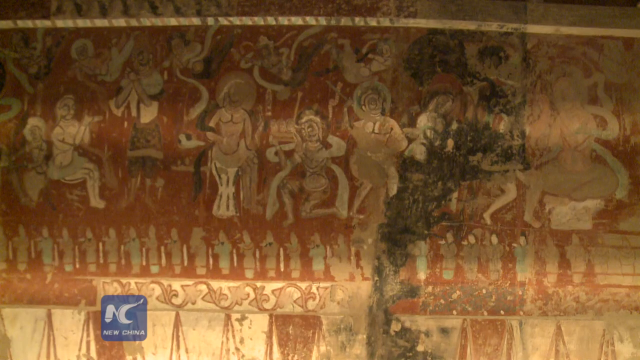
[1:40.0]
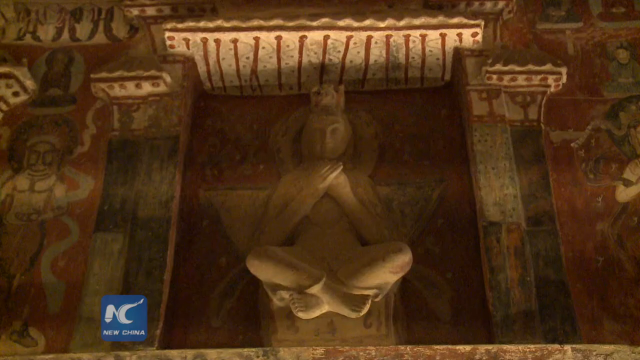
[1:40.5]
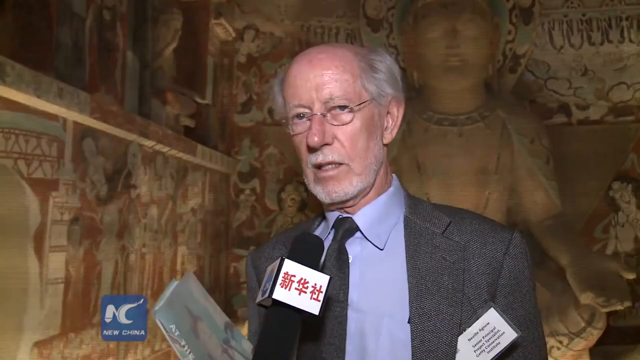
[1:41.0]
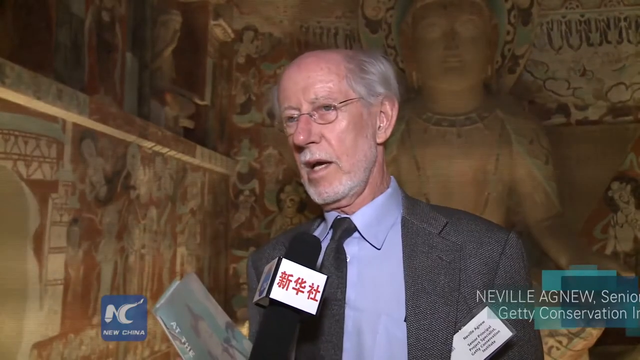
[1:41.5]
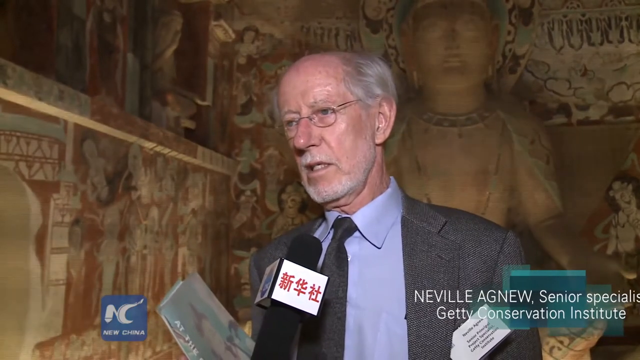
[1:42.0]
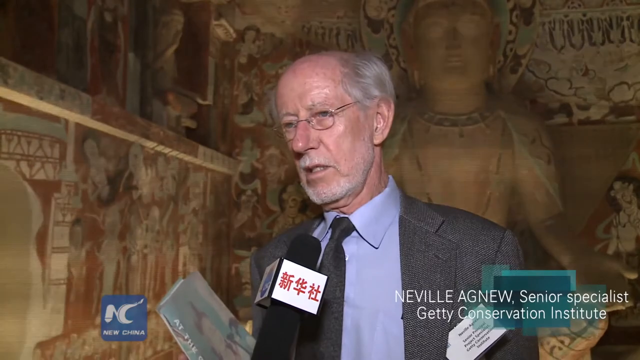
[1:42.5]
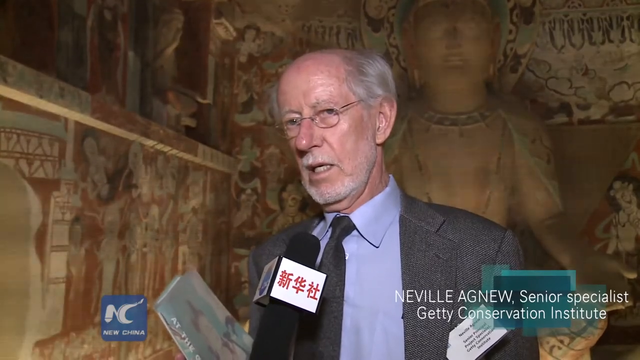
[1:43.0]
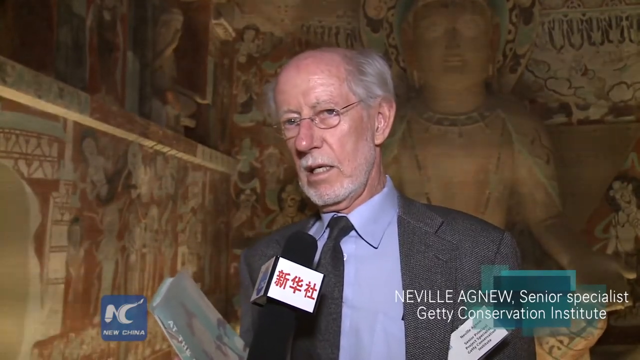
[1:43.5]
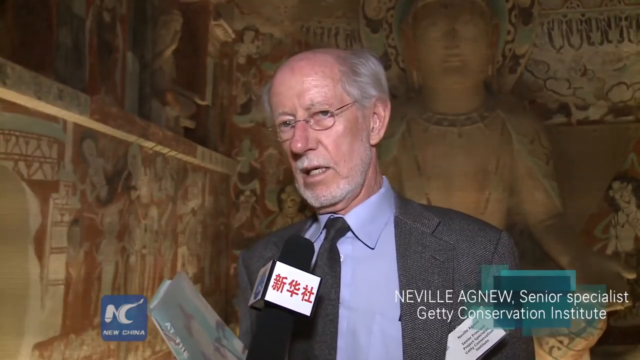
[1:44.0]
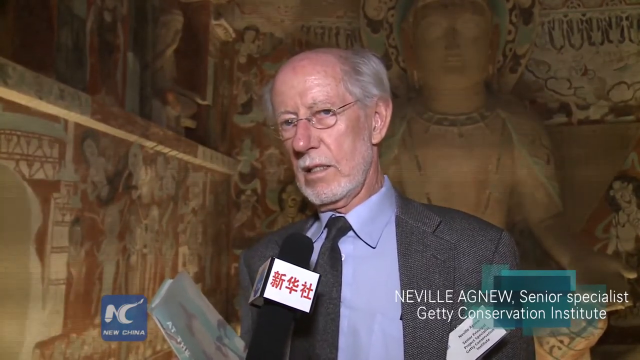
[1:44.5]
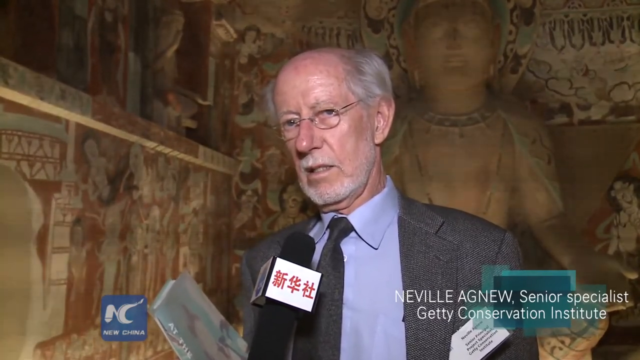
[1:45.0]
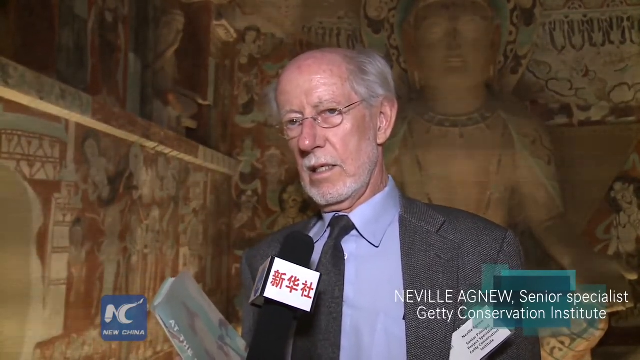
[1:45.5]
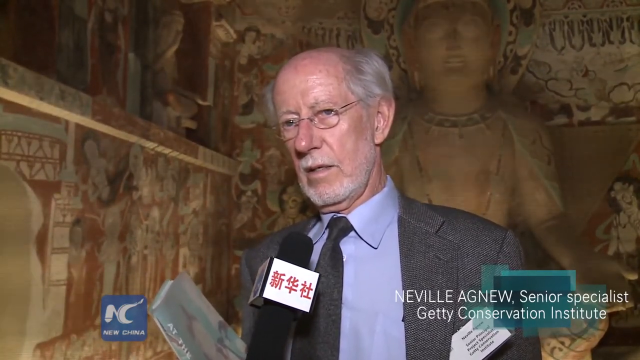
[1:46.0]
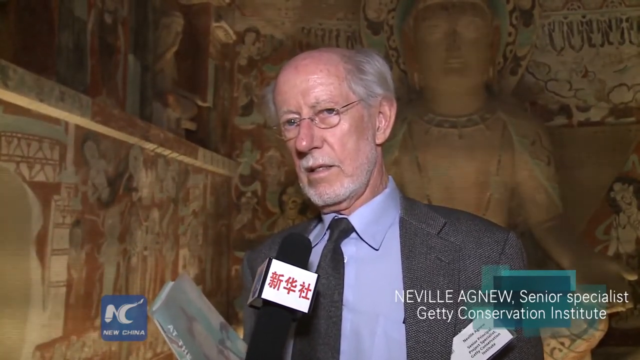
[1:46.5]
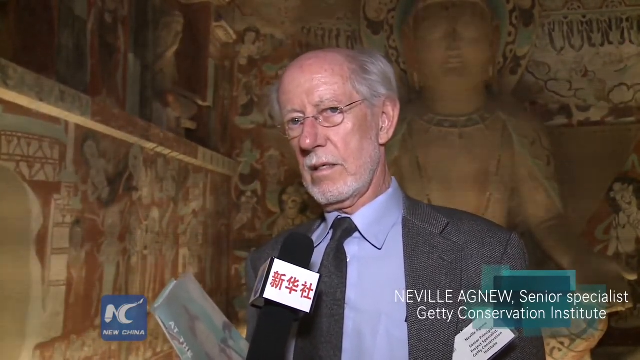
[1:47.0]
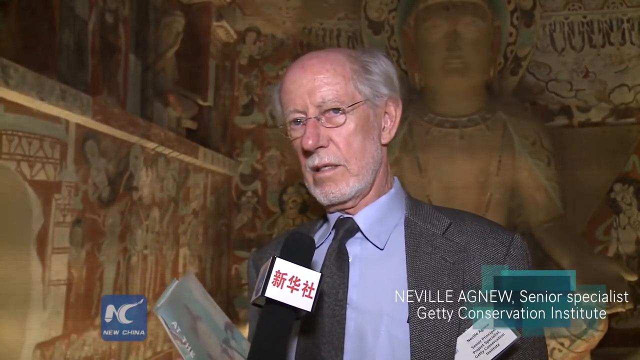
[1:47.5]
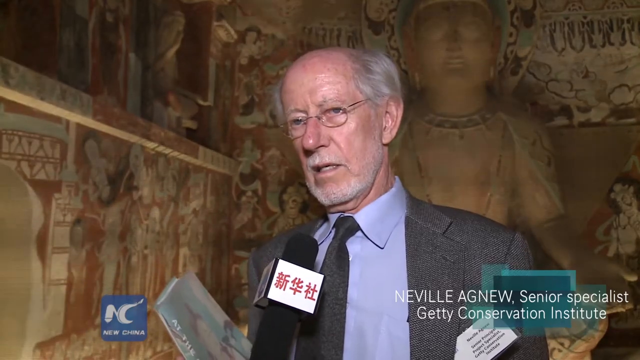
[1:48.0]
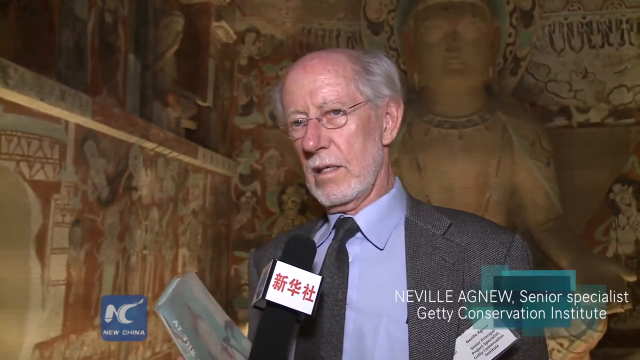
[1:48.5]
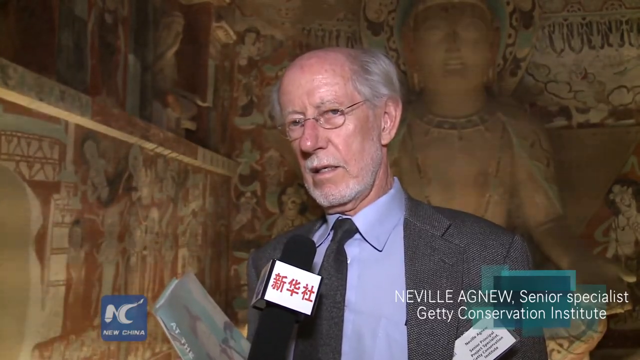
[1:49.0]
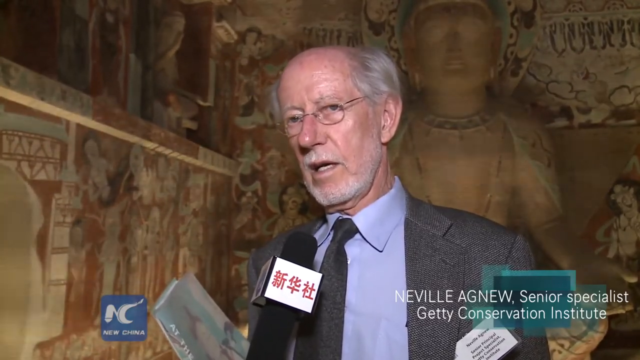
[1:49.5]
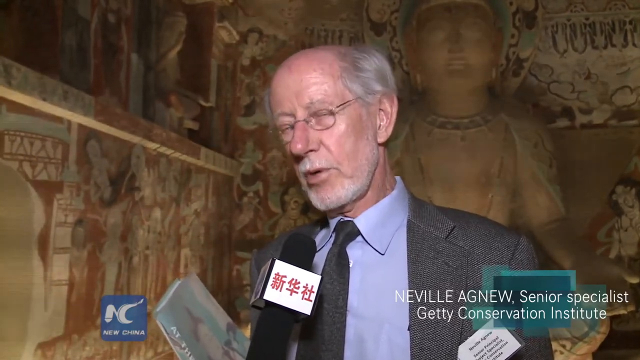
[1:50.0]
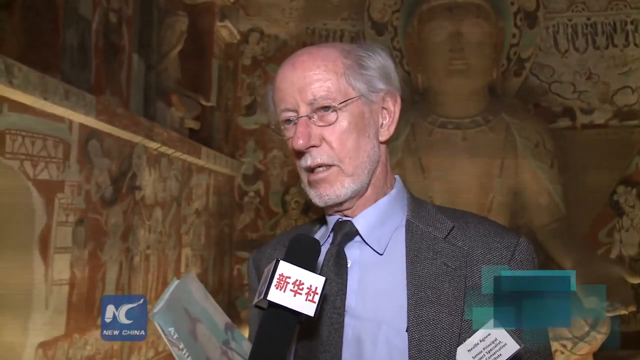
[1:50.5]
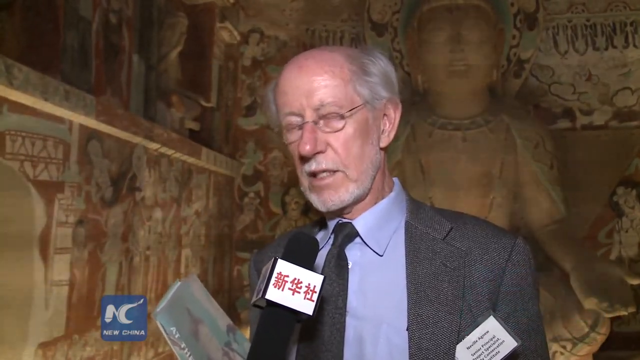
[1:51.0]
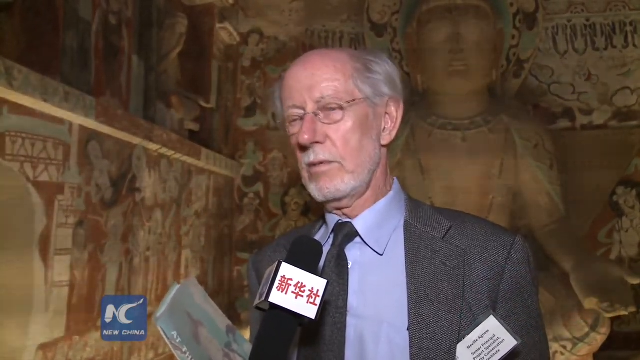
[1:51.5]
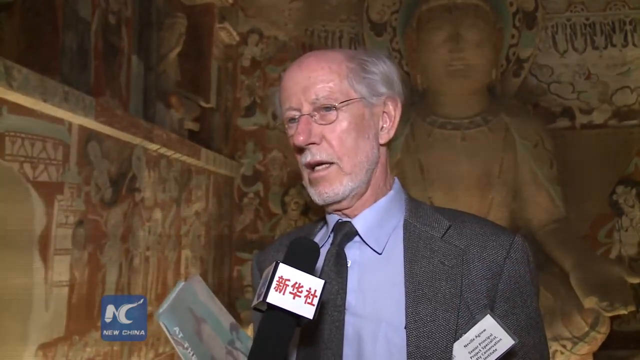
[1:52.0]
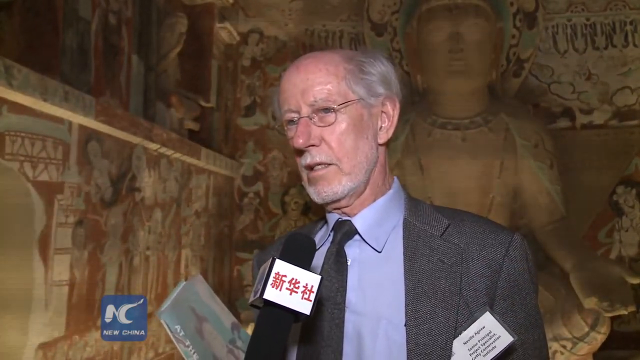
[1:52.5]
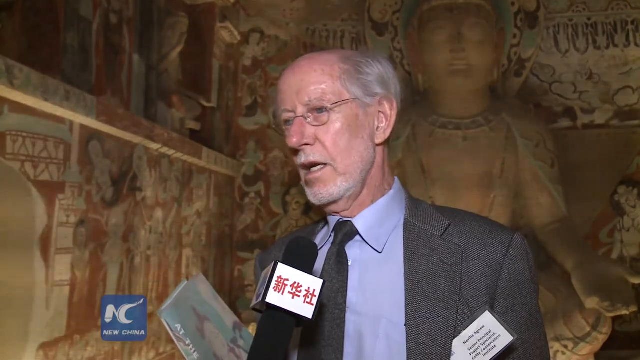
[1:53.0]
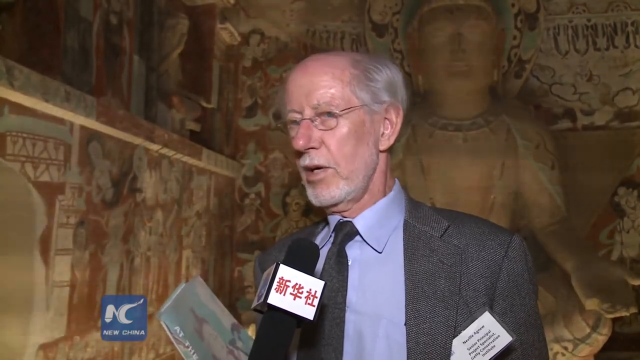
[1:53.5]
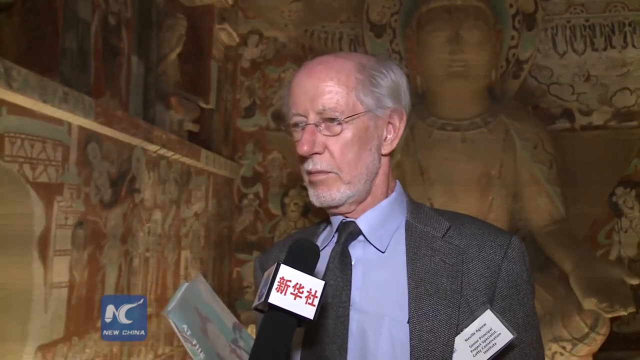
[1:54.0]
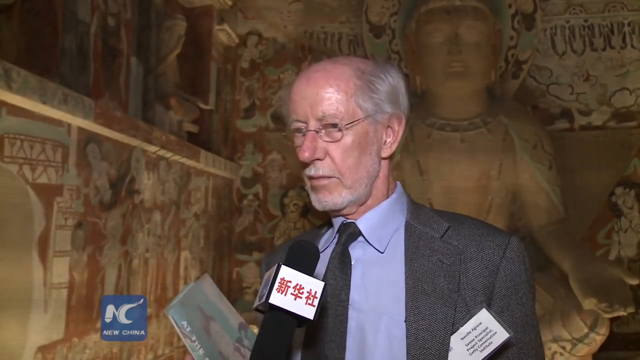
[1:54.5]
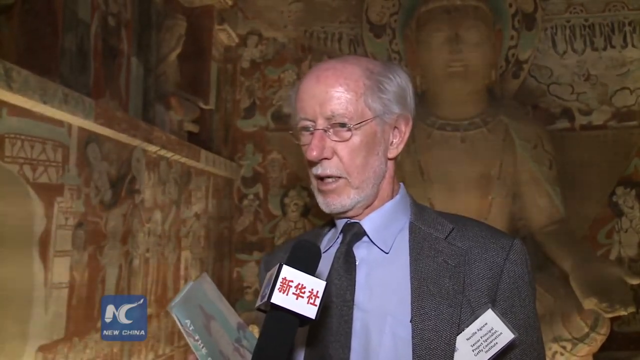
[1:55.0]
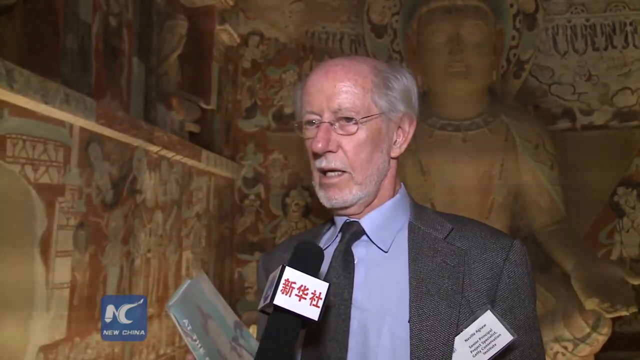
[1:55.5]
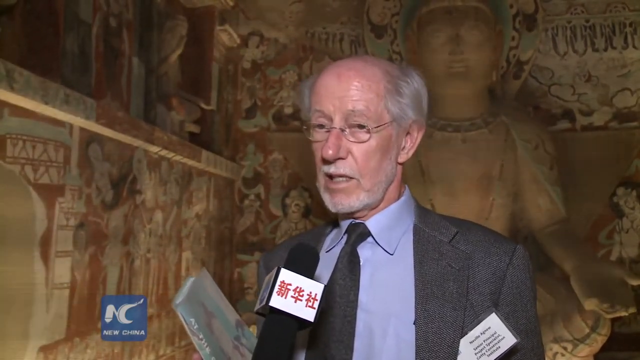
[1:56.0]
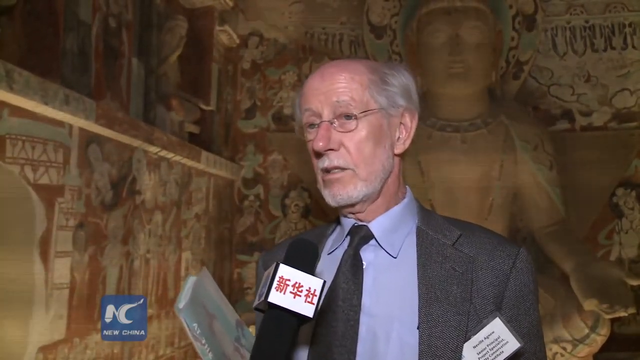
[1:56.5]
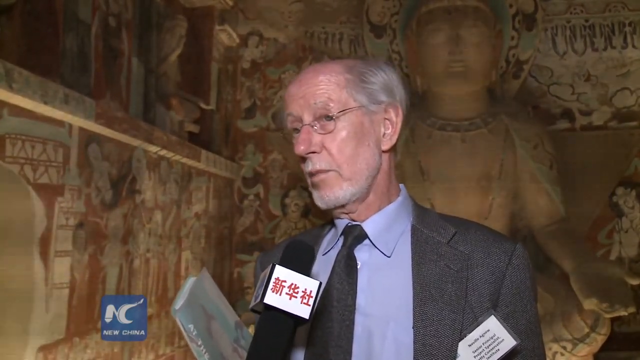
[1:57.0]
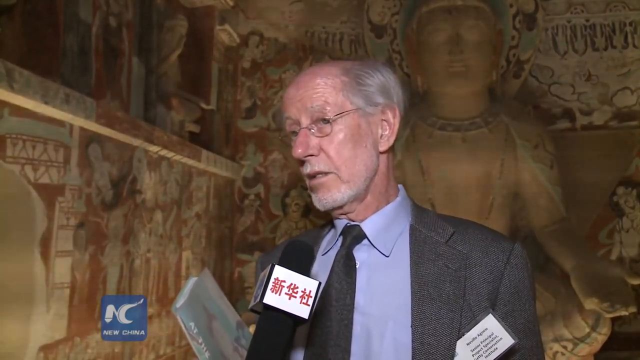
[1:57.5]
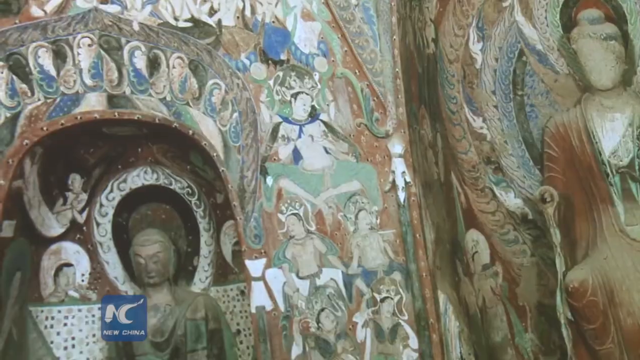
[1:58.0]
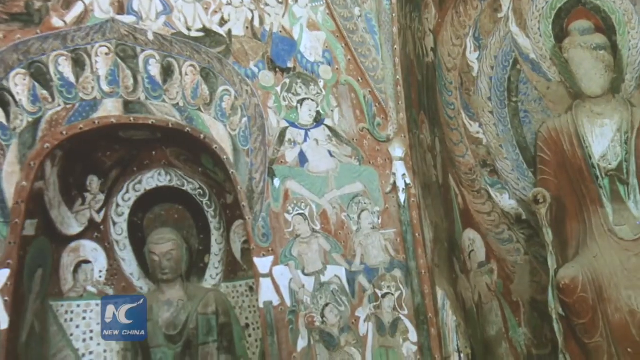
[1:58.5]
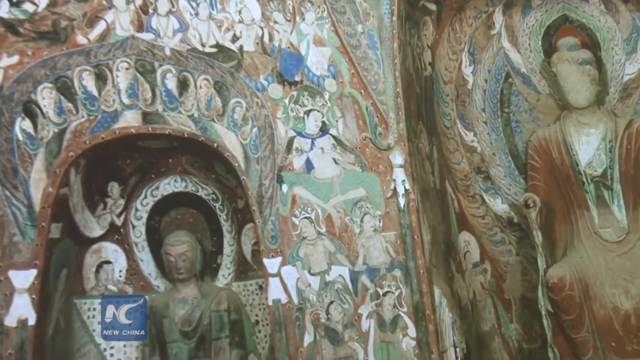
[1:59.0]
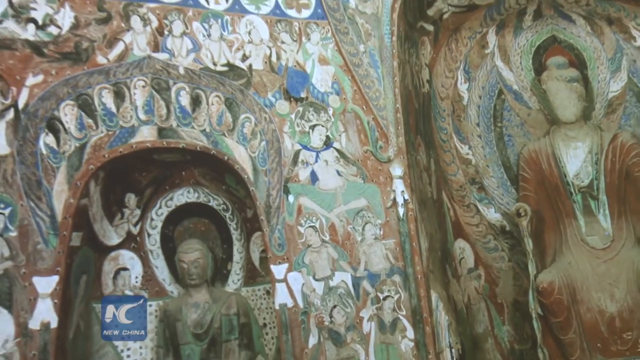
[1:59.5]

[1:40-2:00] Neville Agnew of the Conservation Institute is shown speaking again. The project appears to be meant to preserve findings from Asia and elsewhere, with what is shown looking very much Chinese-oriented. A quick sequence of preserved artworks follows, including many sculptures with iconography behind them. These look more colorful and vivid than the earlier pieces, possibly due to the camera lighting, and look like they may be newer or in much better condition.